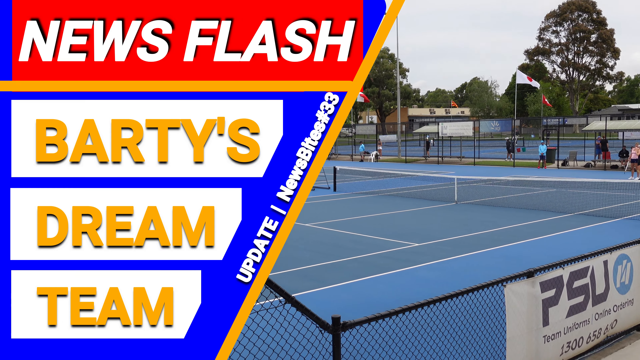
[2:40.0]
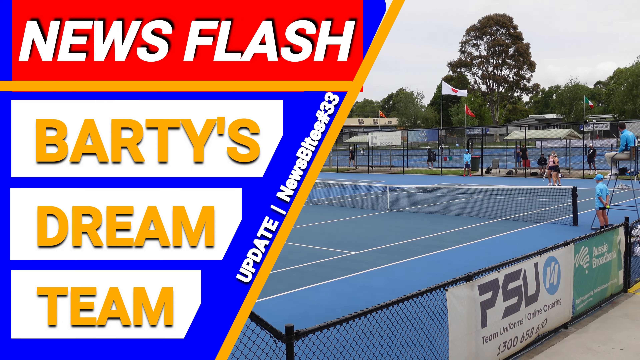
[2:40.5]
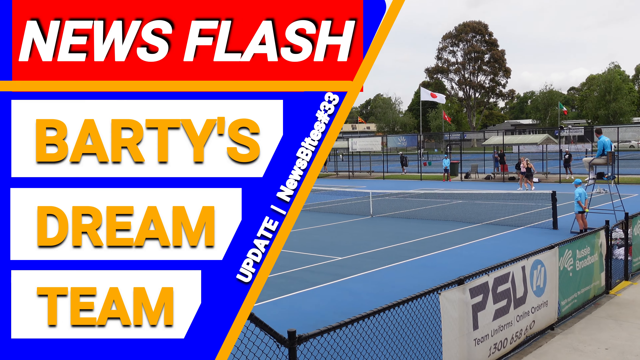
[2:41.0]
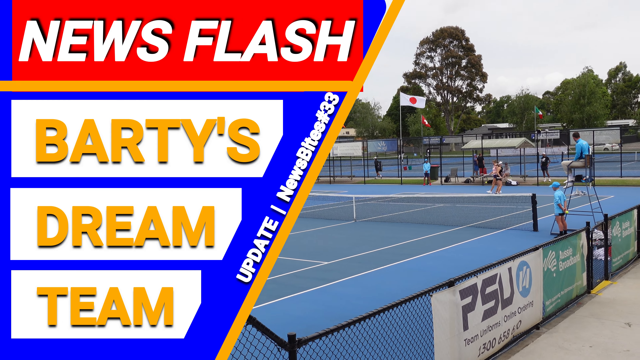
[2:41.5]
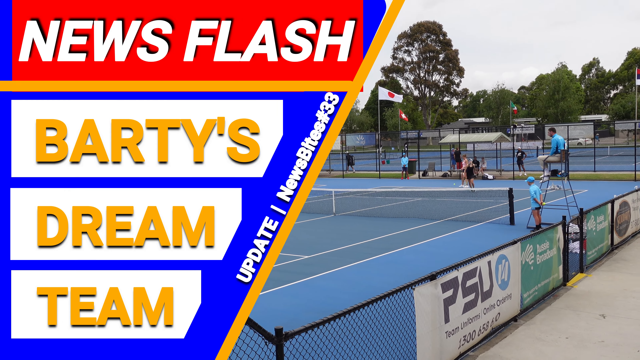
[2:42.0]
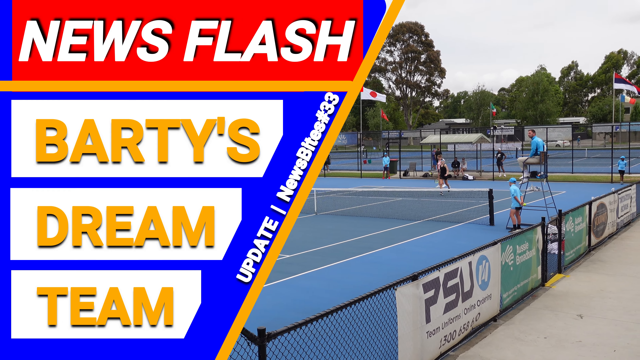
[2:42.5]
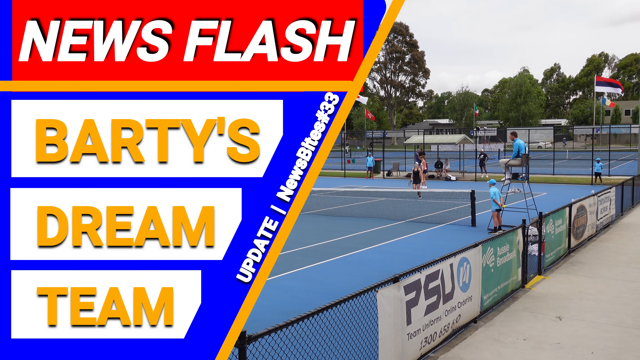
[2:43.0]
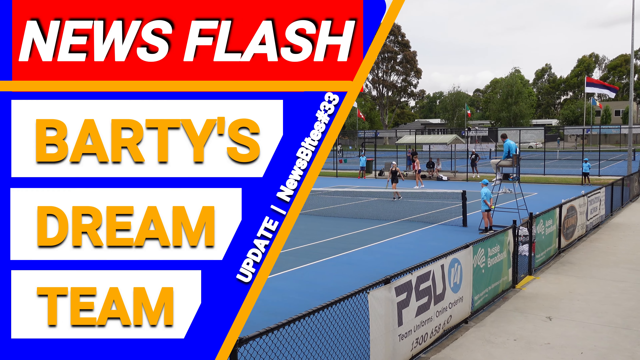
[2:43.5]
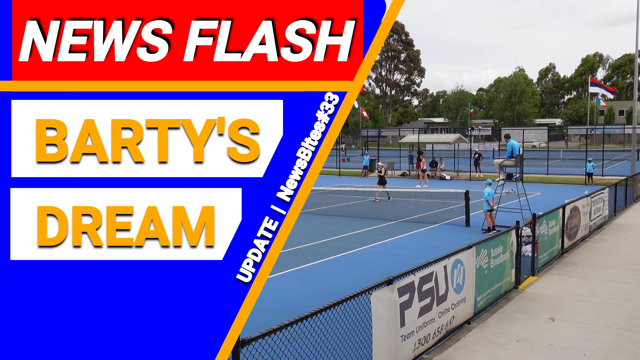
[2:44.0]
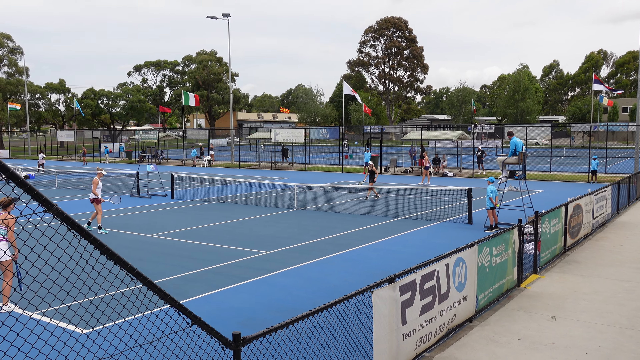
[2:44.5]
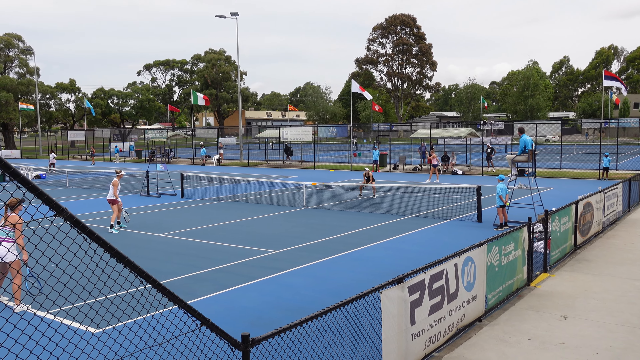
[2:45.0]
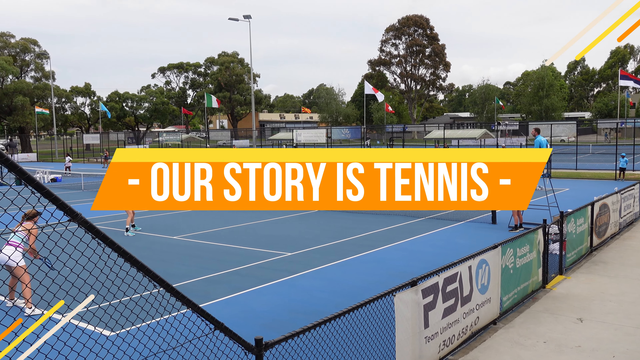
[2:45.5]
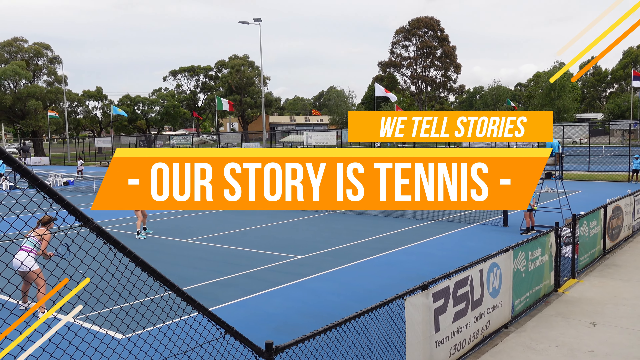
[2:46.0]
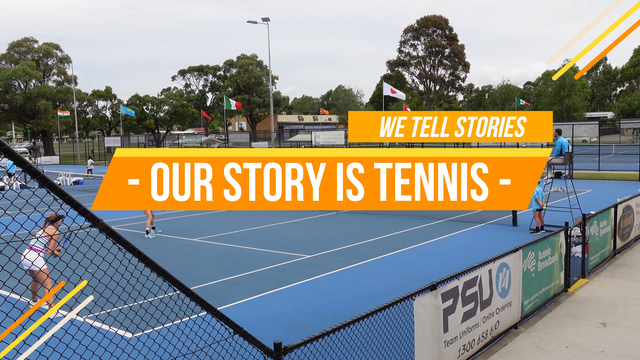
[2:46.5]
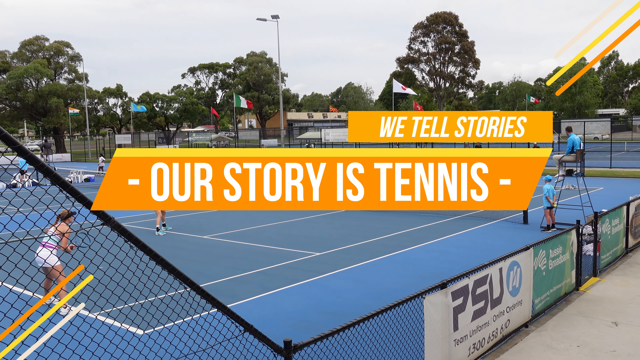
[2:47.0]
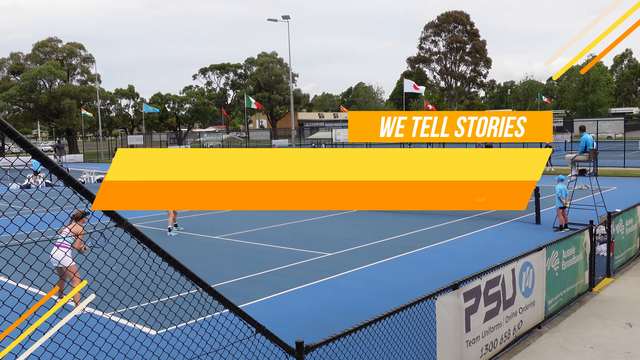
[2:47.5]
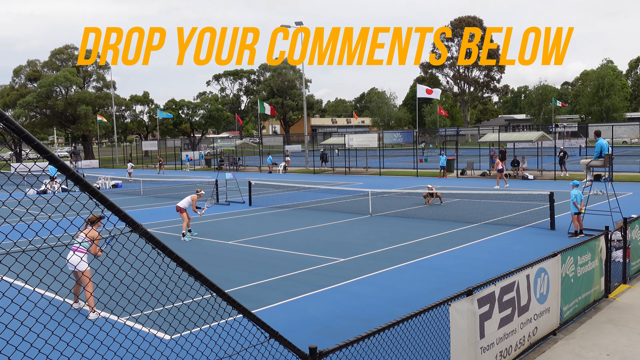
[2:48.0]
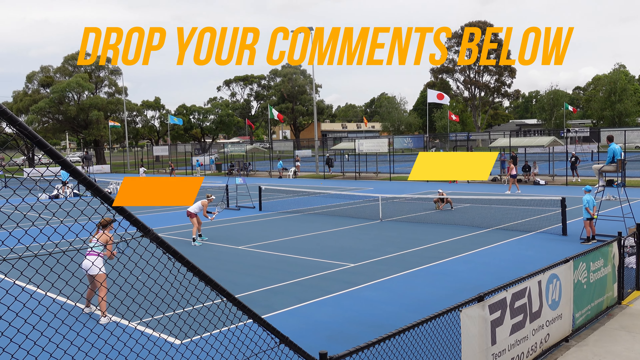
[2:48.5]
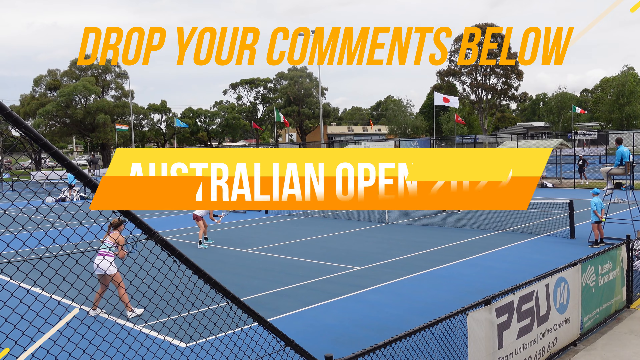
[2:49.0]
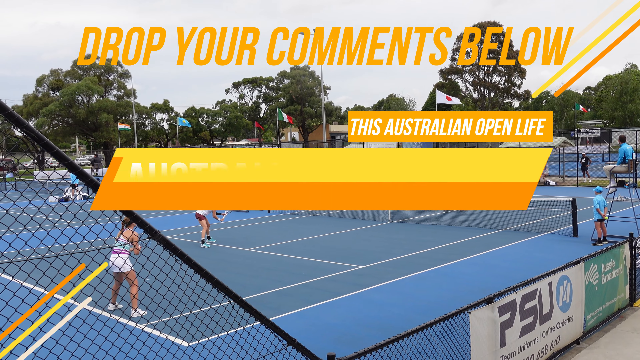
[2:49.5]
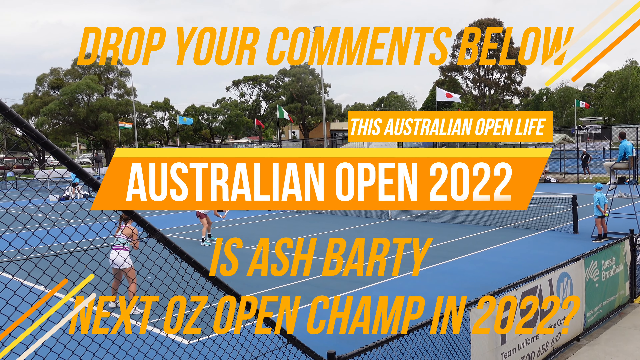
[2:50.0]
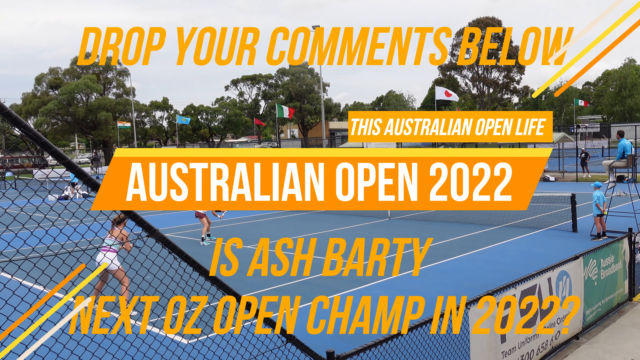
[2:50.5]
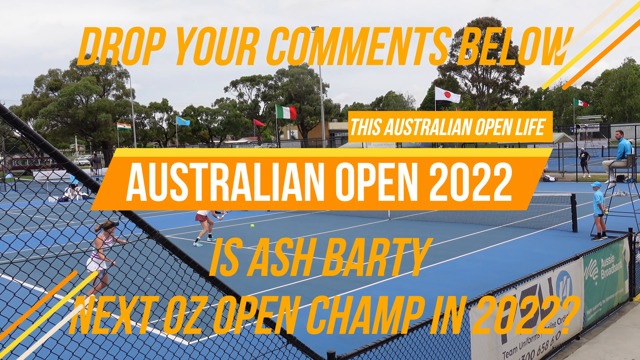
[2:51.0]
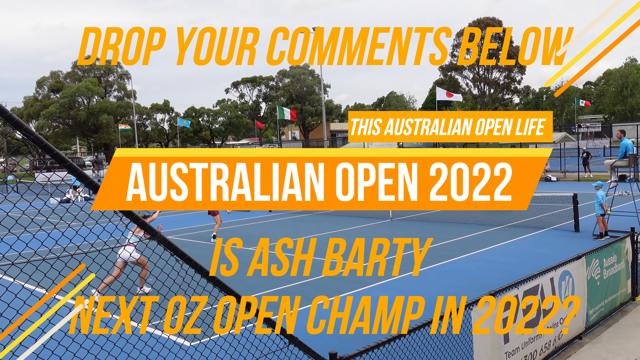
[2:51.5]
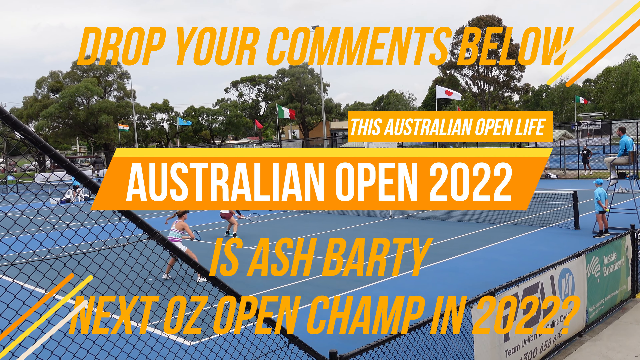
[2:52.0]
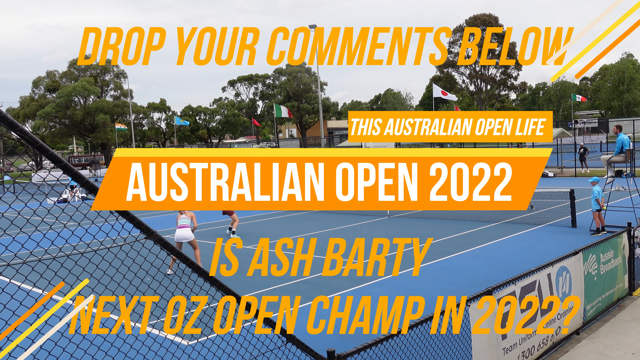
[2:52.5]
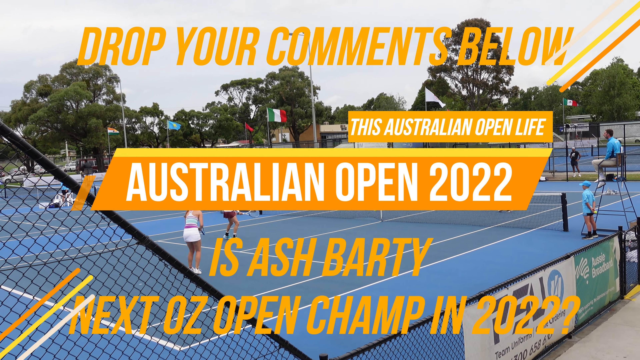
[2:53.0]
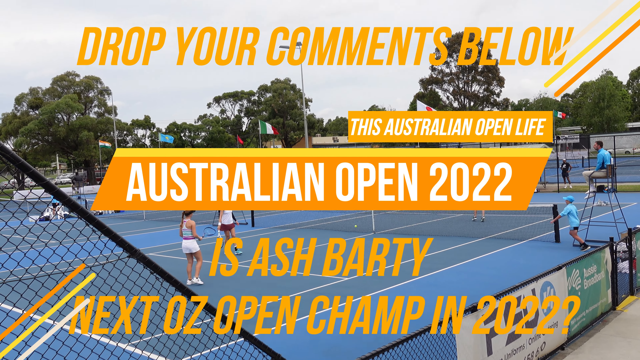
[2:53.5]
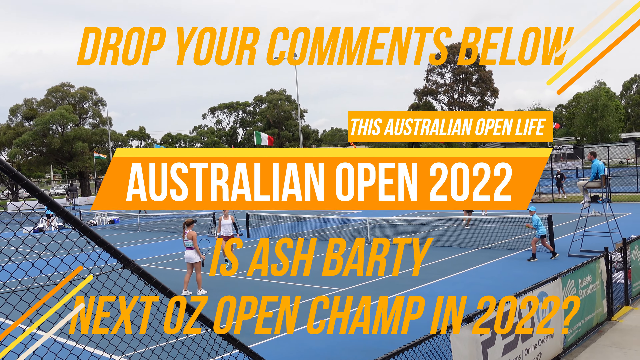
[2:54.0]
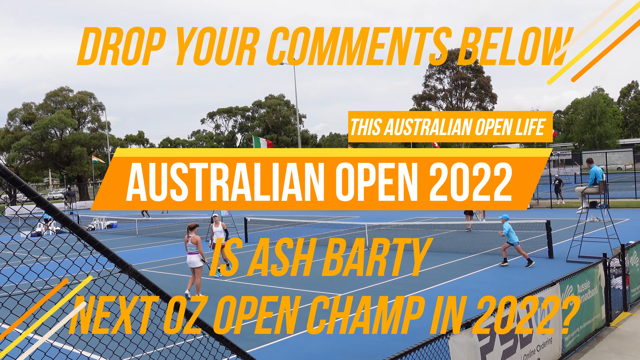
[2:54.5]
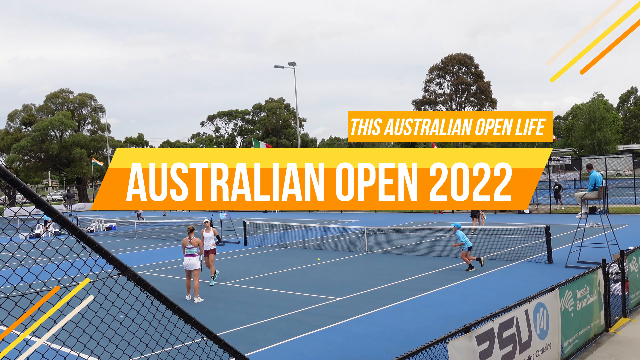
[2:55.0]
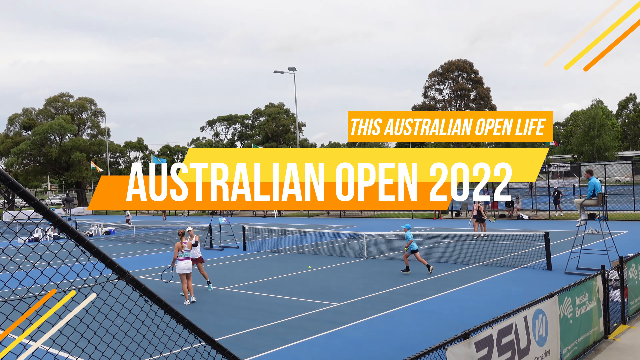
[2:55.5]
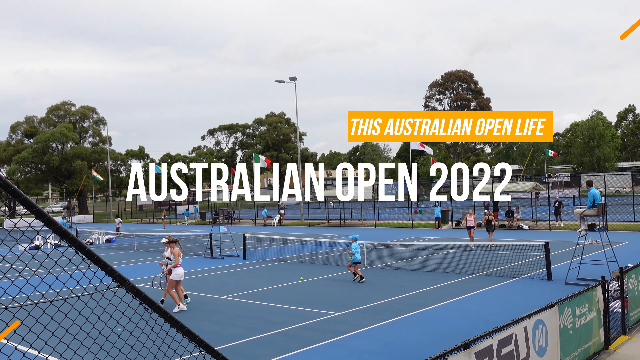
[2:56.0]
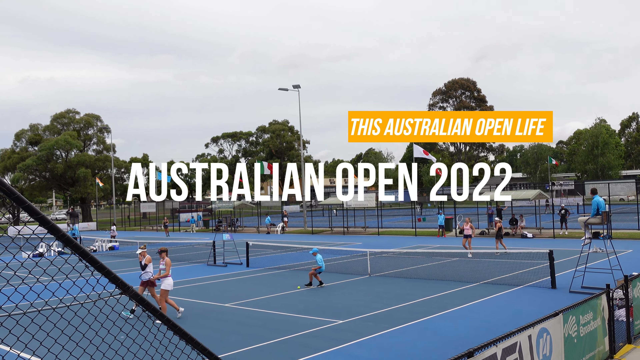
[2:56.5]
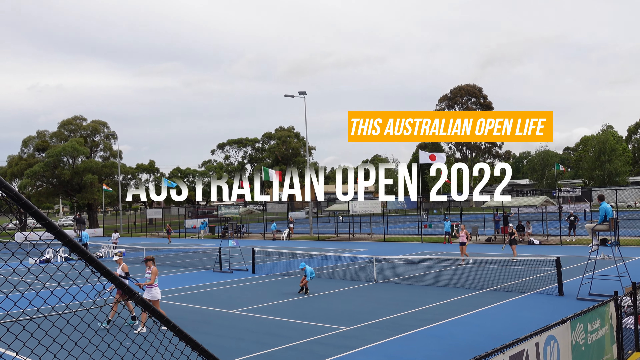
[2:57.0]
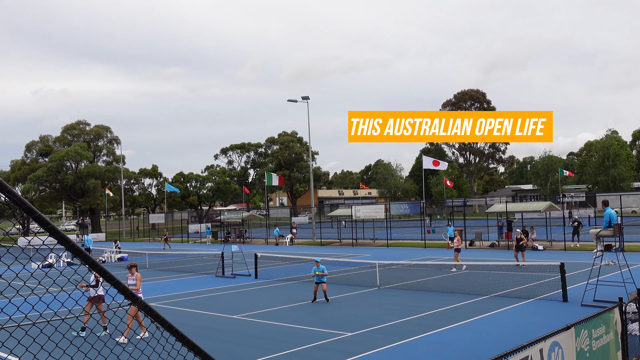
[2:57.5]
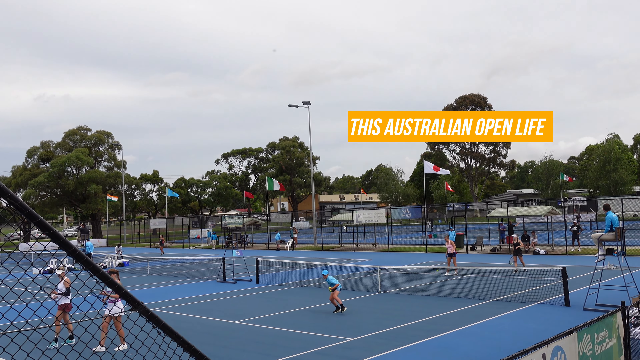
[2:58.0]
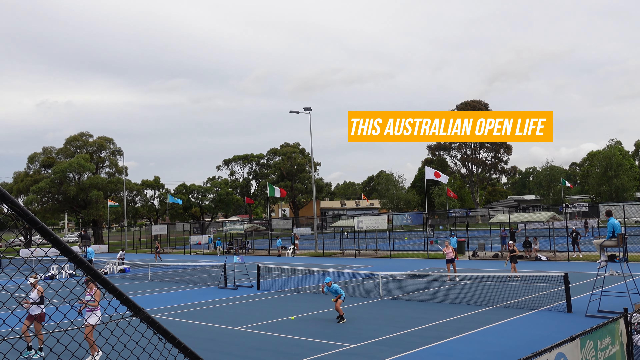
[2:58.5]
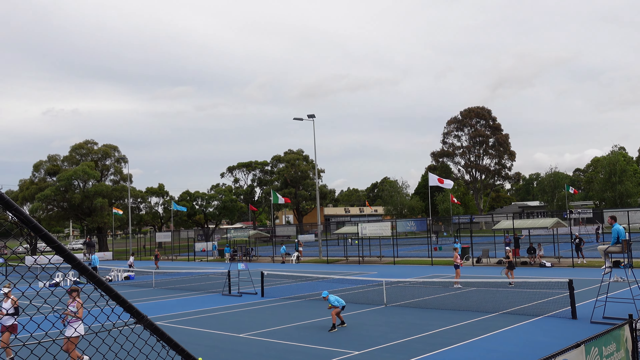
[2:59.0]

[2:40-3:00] Text reads "Newsflash Barty's dream team update news bites number 33", with a tennis court in the background. An advertisement on the fence of the court reads "PSU". No game is going on yet, but the players are getting ready to serve: two women in white are on one side and two in black on the other. A ball boy stands under the umpire chair, where the umpire is sitting. Flags and trees are in the background at this outdoor event. Title text then appears reading "We tell stories", "Our story is tennis", "Drop your comments below", "The Australian Open life" and "Australian Open 2022 is Ash Barty's next". The text disappears, the women play, and after a serve the ball boy runs in to retrieve the ball.